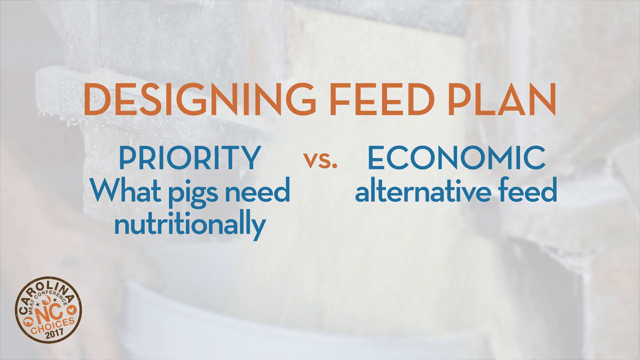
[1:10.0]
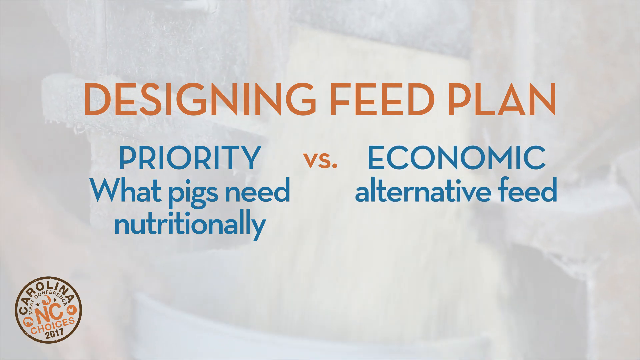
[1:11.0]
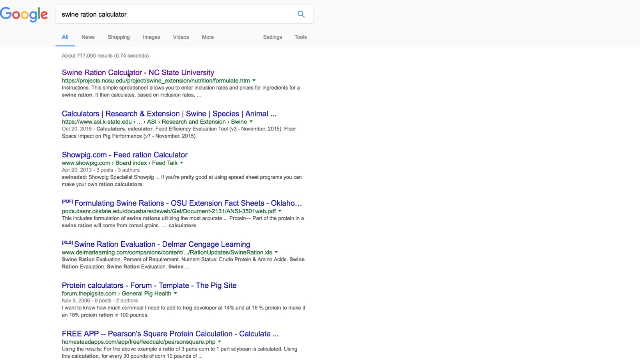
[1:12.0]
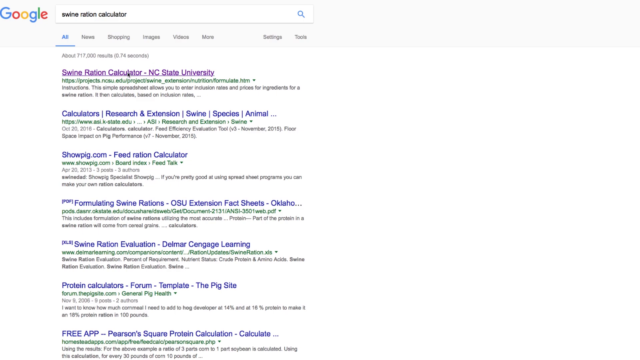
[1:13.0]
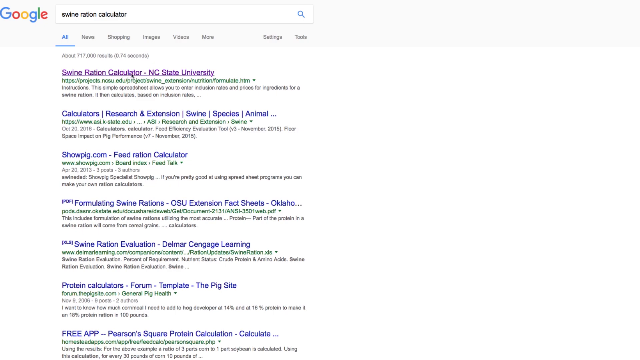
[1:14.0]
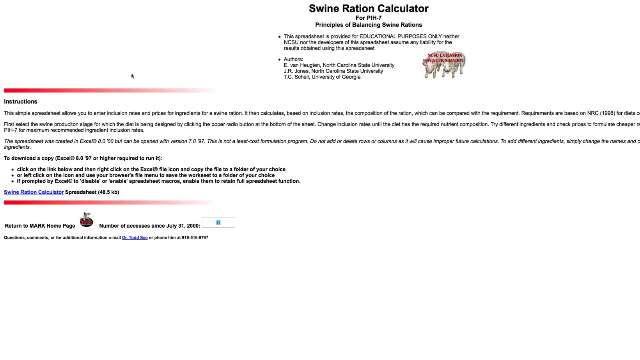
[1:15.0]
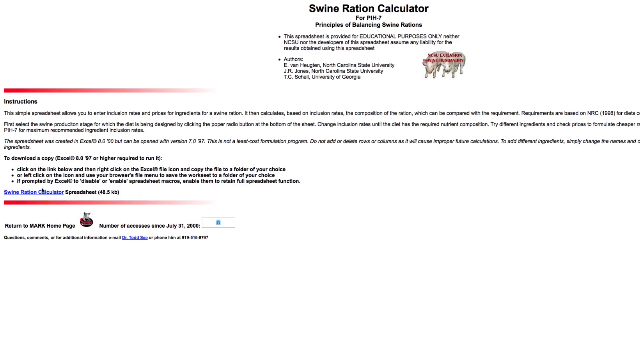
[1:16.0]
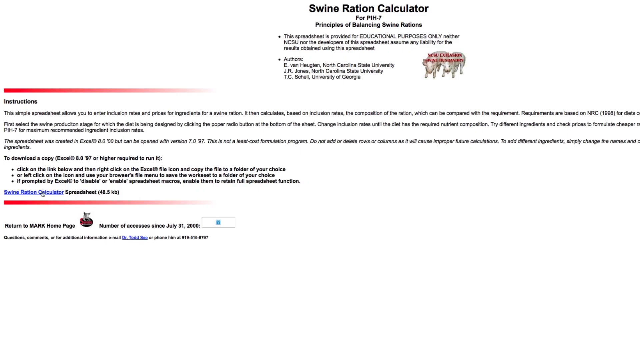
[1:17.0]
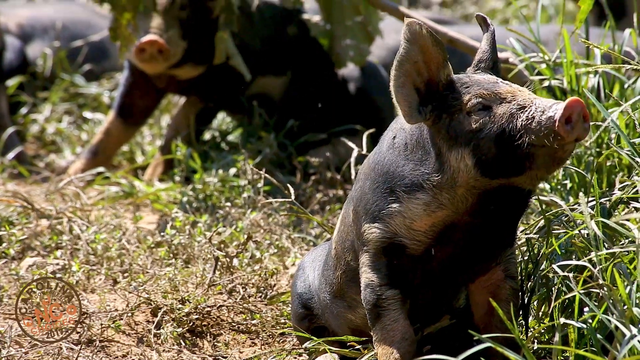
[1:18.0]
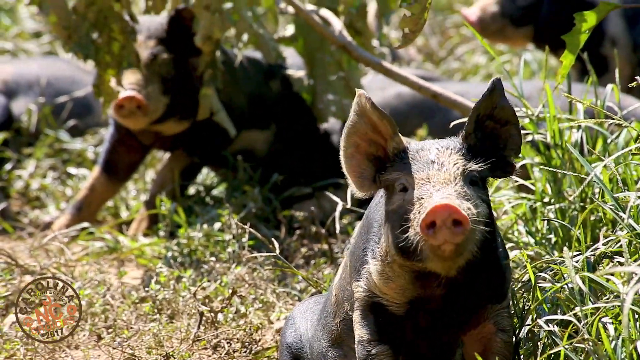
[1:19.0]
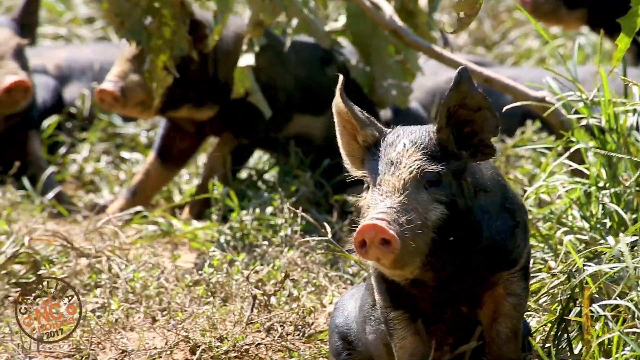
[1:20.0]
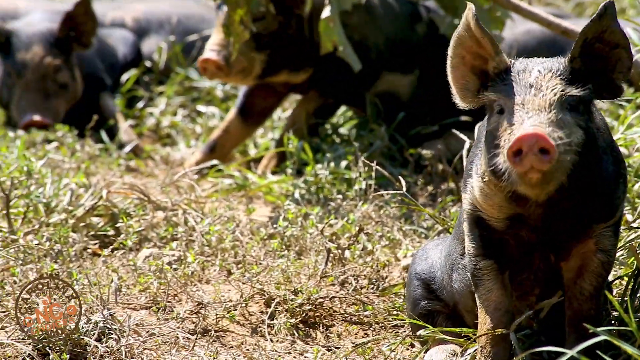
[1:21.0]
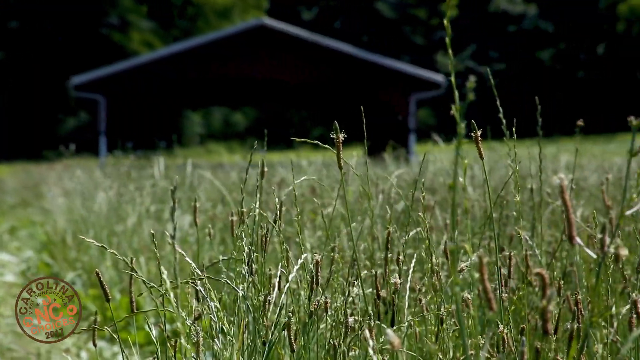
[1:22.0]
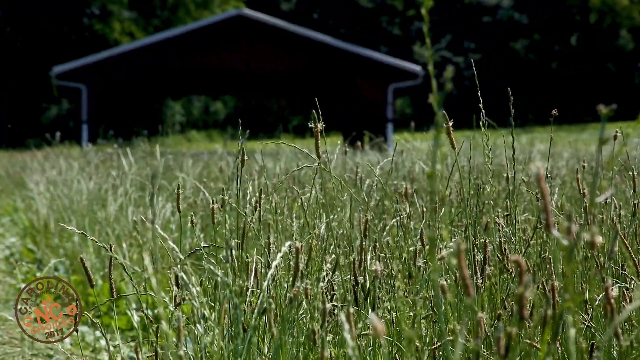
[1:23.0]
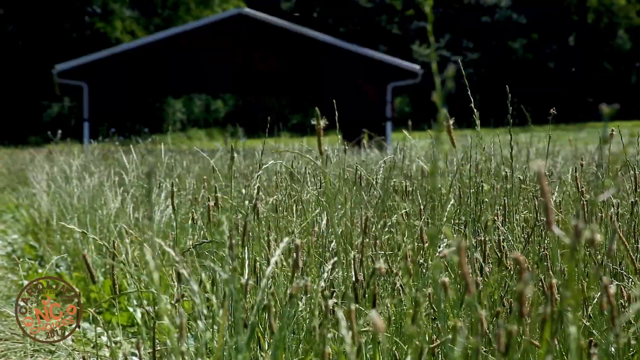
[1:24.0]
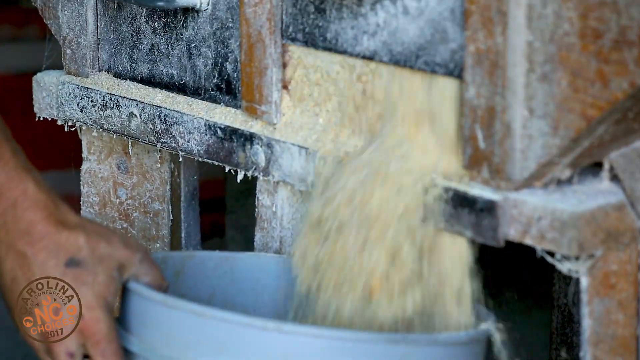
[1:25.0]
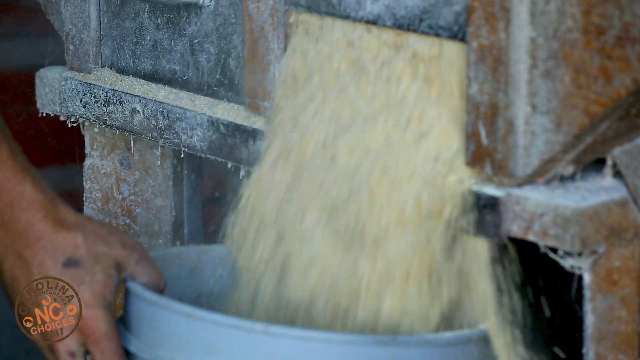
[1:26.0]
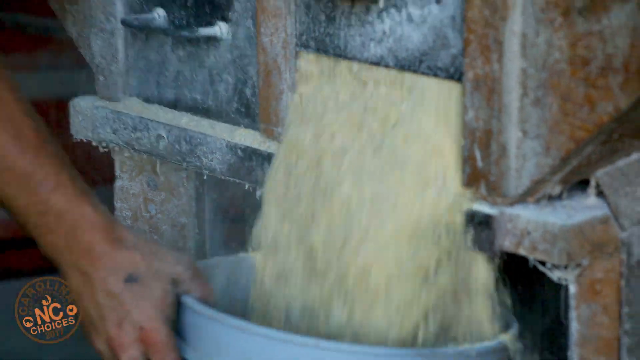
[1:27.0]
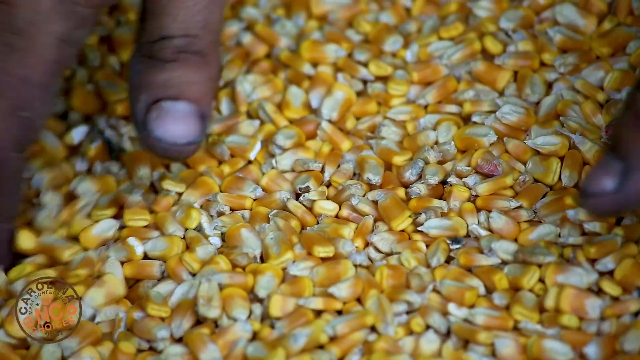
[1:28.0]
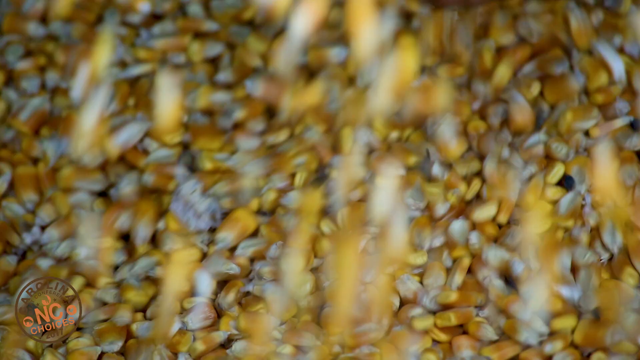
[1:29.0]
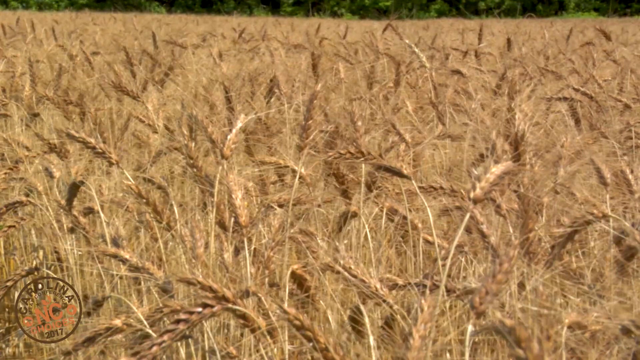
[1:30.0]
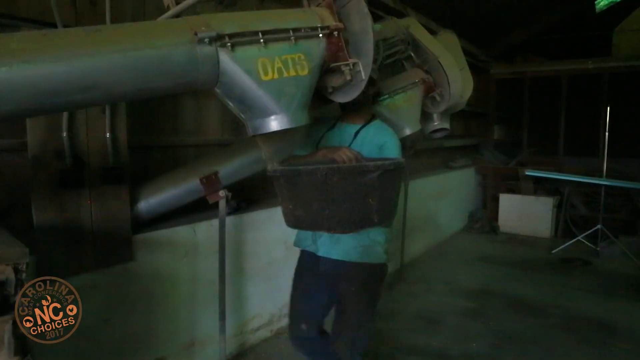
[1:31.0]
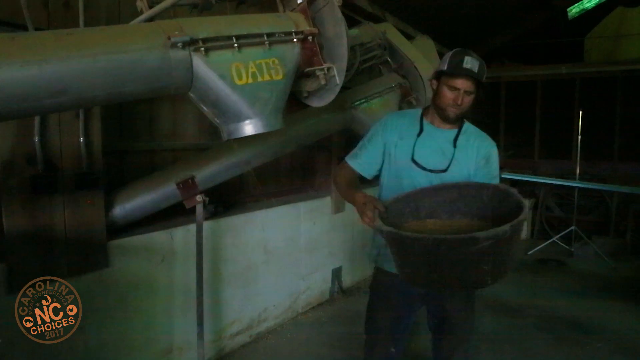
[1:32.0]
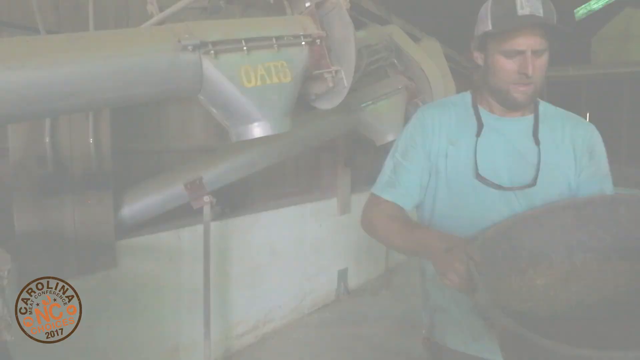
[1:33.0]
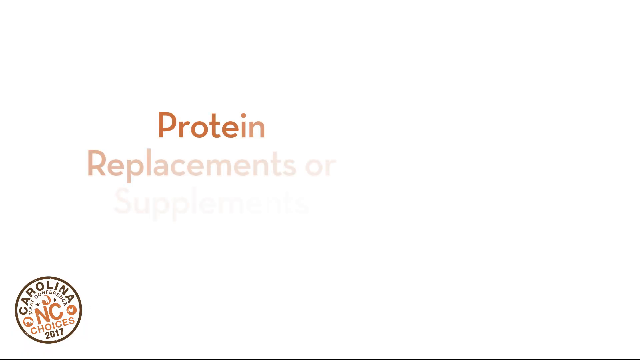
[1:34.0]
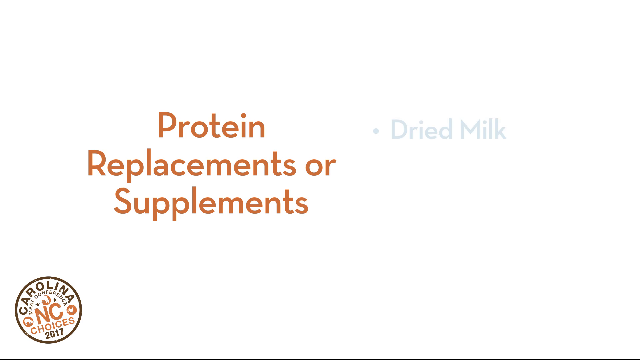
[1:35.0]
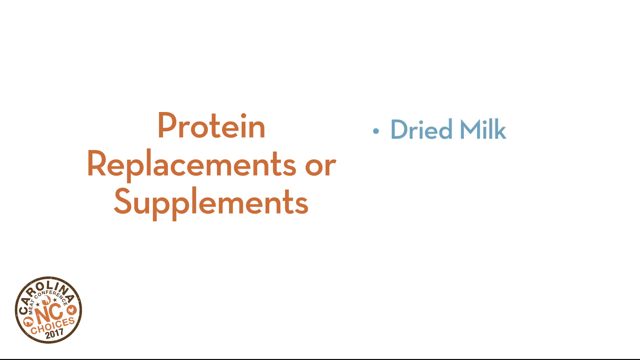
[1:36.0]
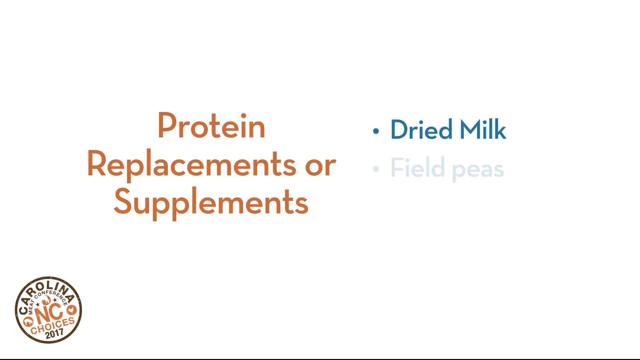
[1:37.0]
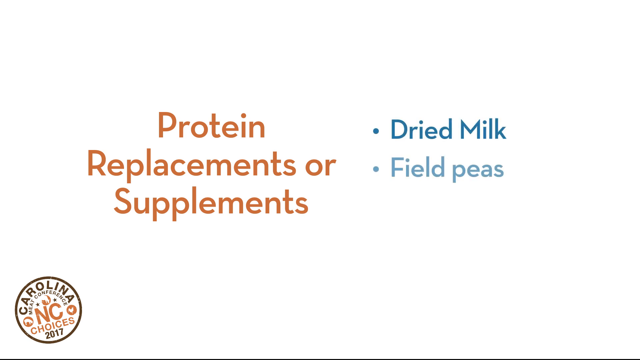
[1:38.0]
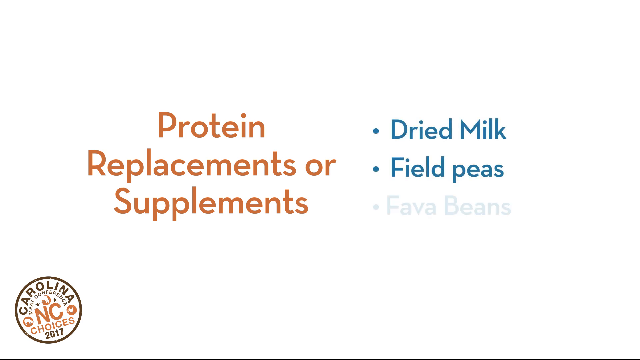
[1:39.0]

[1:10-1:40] The screen has the header in orange, "designing feed plan," and then, mainly in blue, "priority, what pigs need nutritionally versus economic alternative feed." Next, a Google web result appears with a bunch of blue hyperlinks. Some of the results are "swine ration calculator," "new NC State University calculators," "research and extension swine species animal," "showpig.com feed ration calculator," "formulating swine rations," "OSU extension fact sheets, Oklahoma," "swine ratio evaluation," "Delmar Cengage Learning," "protein calculators," "forum template," and "the pig site." A page then shows "swine ratio calculator" with a lot of small lettering that is not legible, though "instructions" can be made out. It is an old-style website with very simple information. He clicks on a blue hyperlink, which leads to a photo of some pigs sitting down enjoying the sun, their butts on the ground and their heads raised to the sky with their eyes closed.